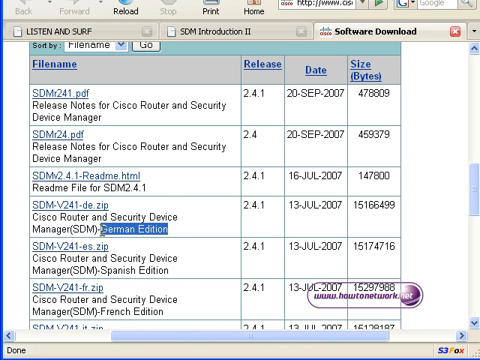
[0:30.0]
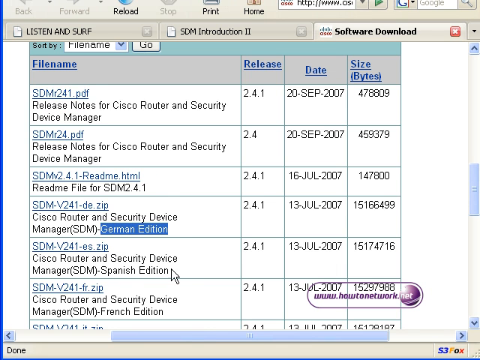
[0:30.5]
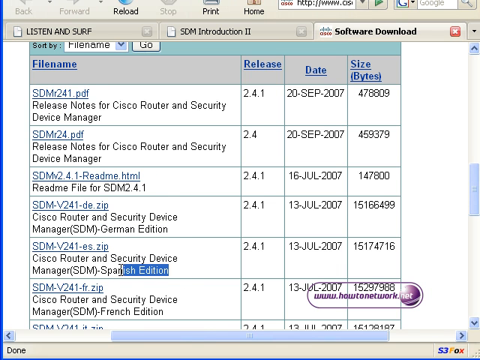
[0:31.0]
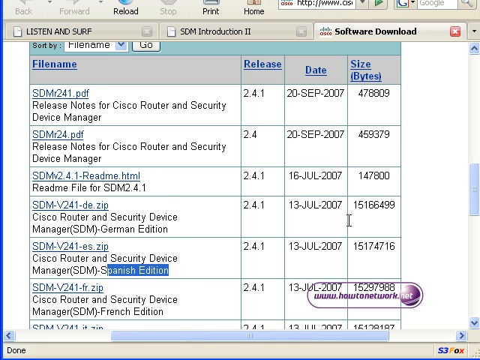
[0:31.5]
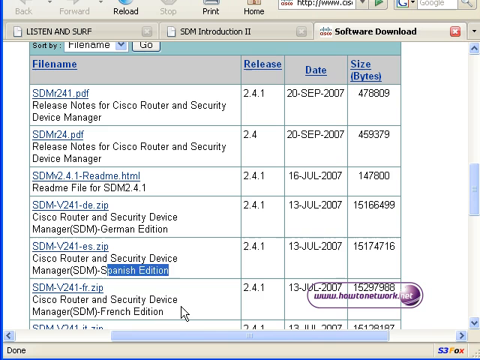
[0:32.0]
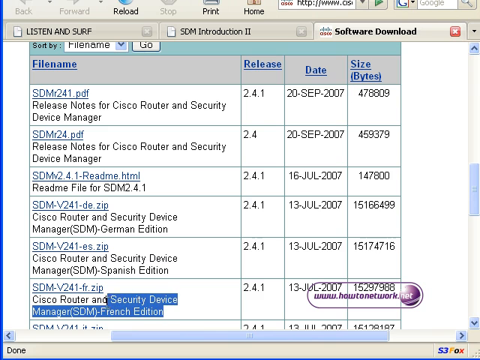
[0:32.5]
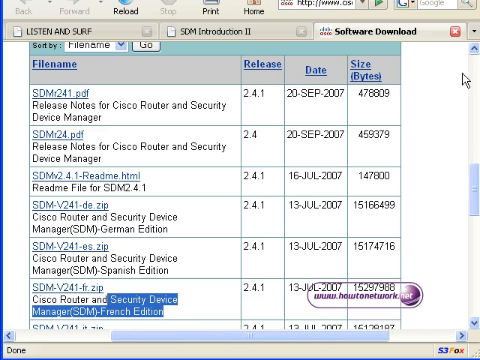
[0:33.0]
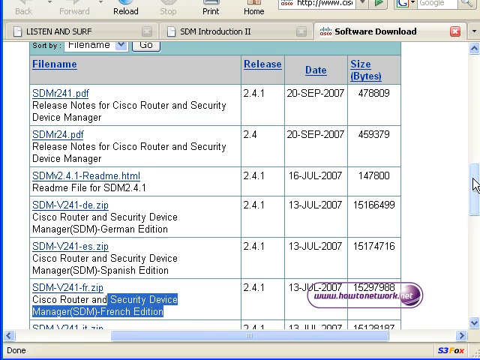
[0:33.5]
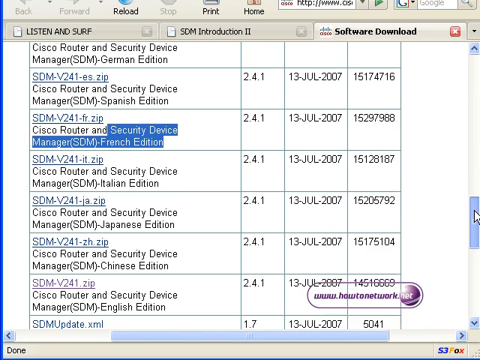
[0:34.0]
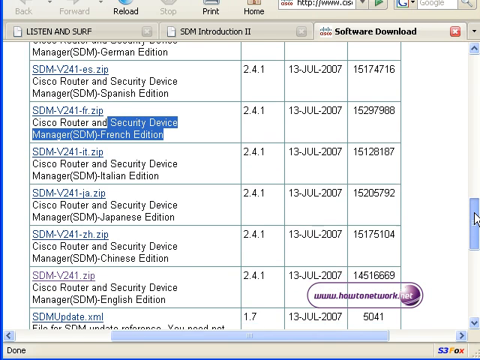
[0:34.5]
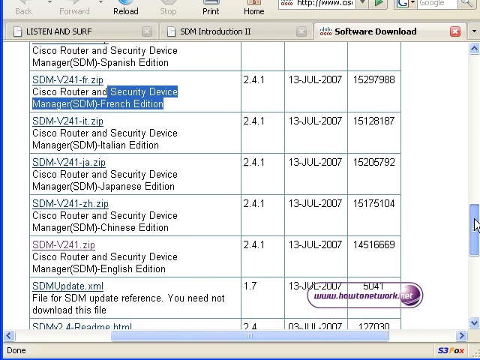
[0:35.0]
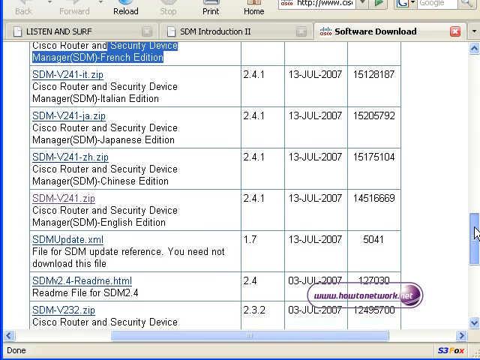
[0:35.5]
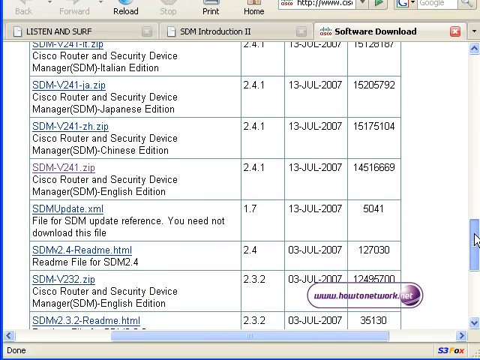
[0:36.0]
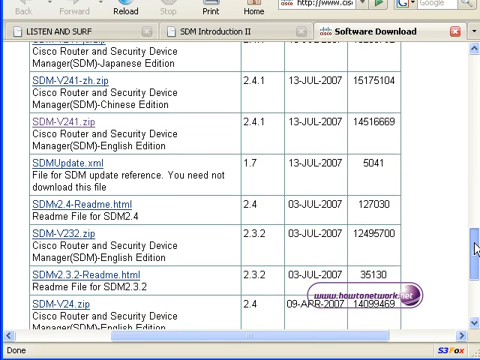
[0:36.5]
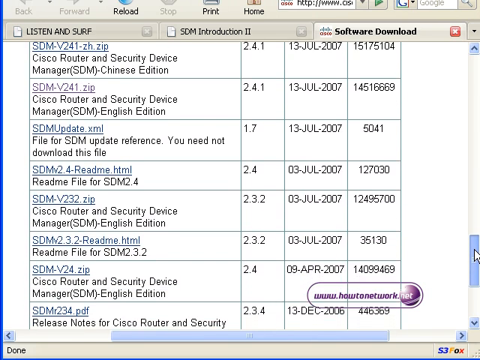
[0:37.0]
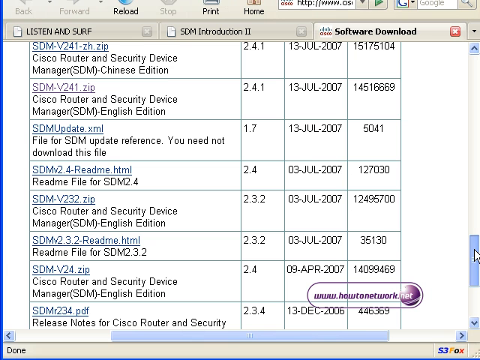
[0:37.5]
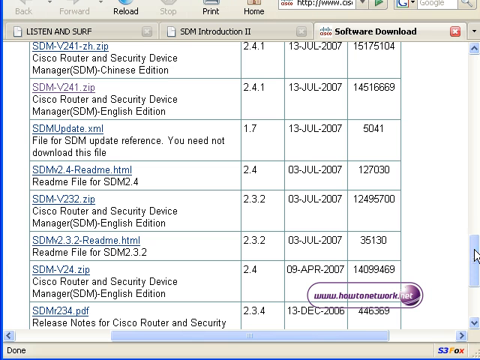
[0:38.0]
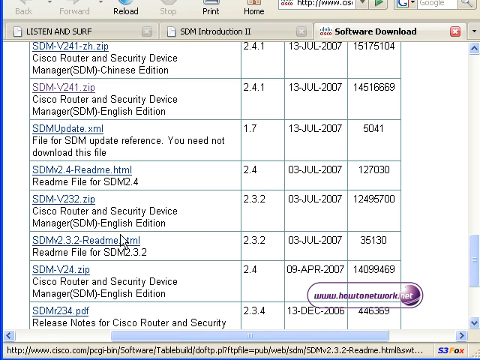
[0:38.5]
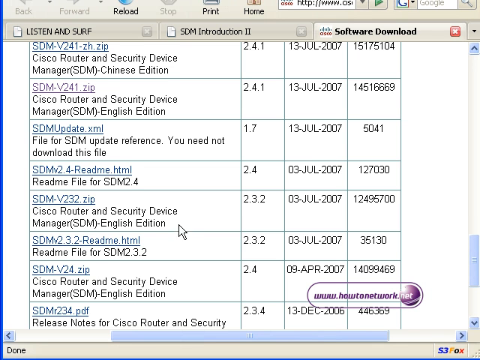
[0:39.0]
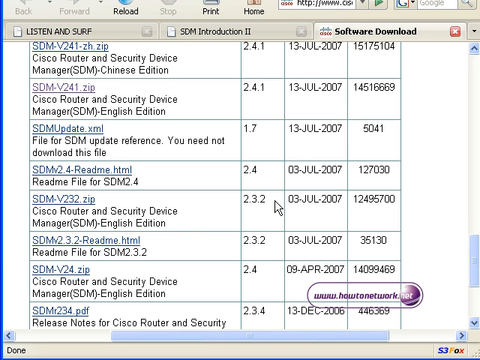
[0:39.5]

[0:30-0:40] The view slowly scrolls down the same chart while a white mouse highlights in blue different words in the file names: first "German Edition", then "Spanish Edition", then "Security Device Manager, SDM, French Edition". The page keeps scrolling down, and then the numbers "2.3.2" are highlighted. The chart also lists the dates of the files, their sizes in bytes, and the model number.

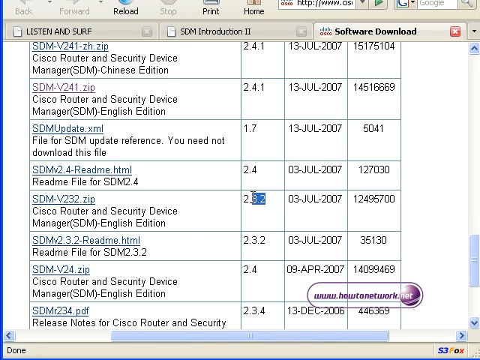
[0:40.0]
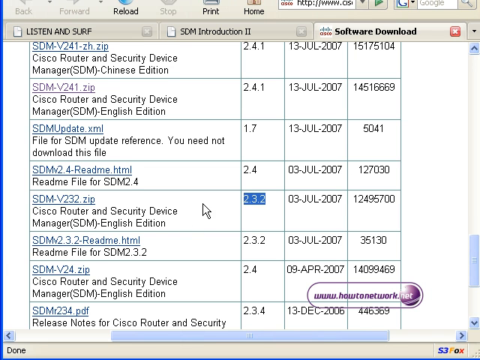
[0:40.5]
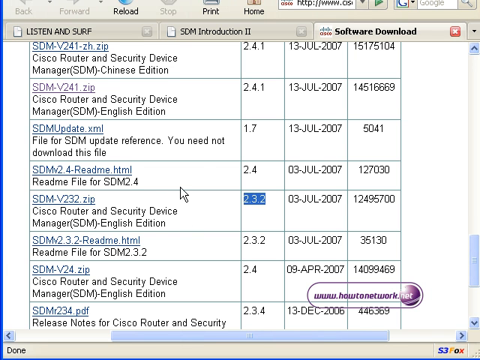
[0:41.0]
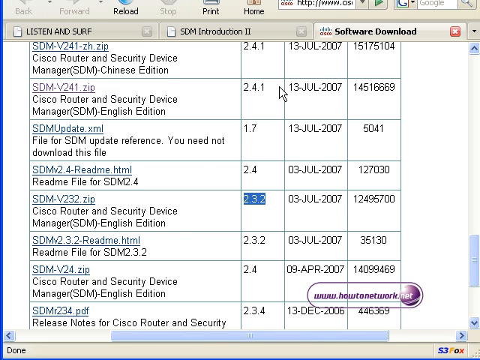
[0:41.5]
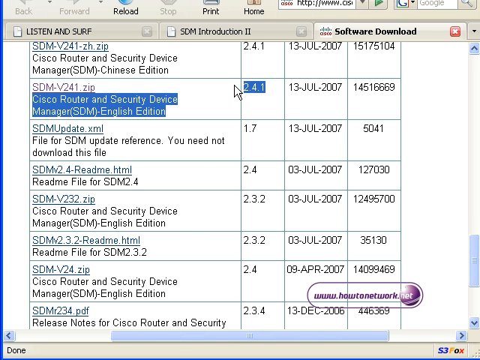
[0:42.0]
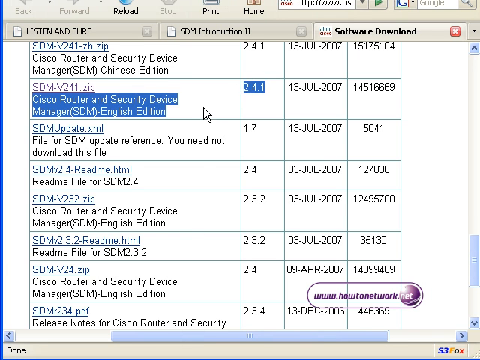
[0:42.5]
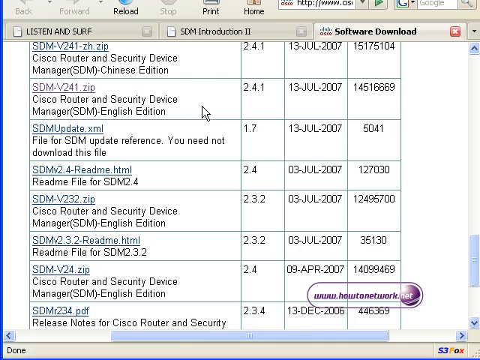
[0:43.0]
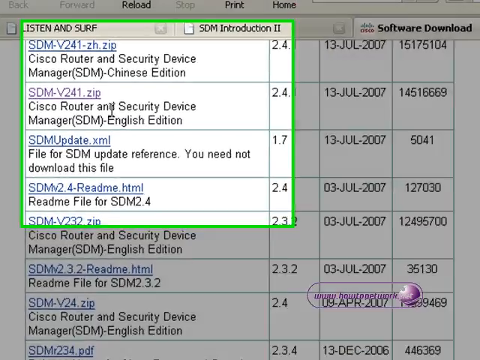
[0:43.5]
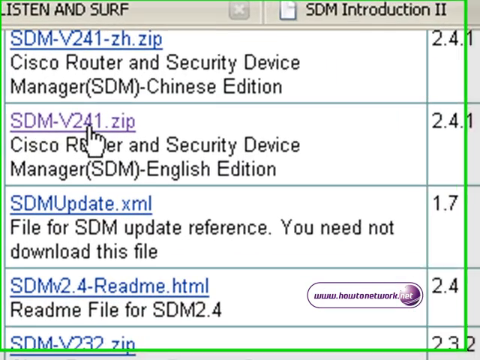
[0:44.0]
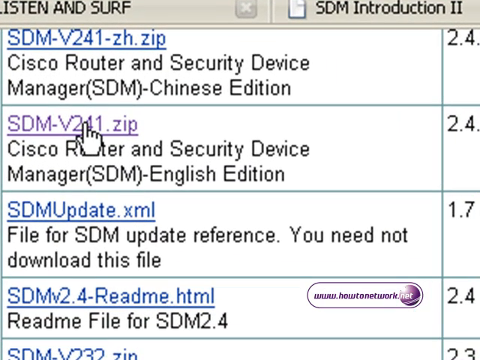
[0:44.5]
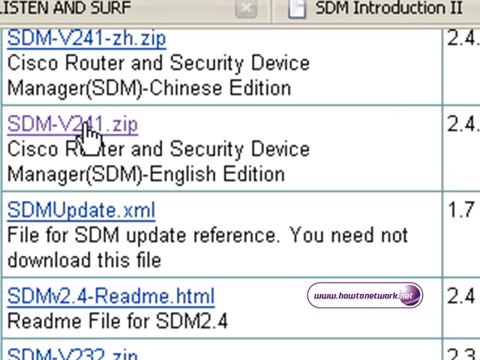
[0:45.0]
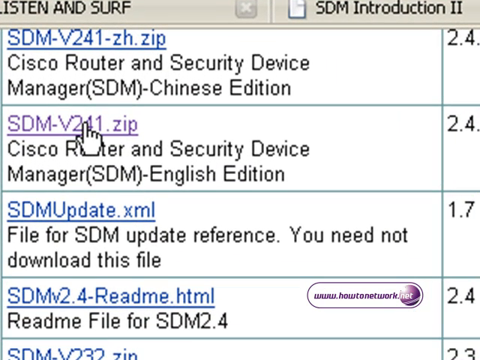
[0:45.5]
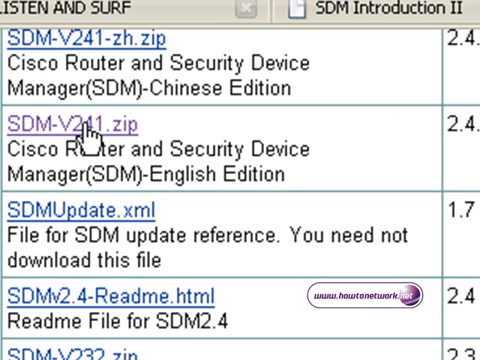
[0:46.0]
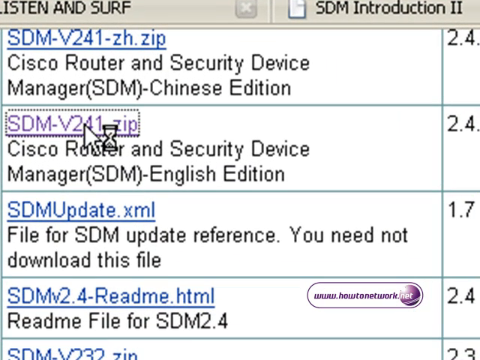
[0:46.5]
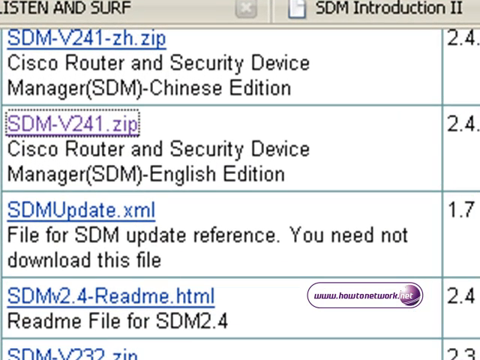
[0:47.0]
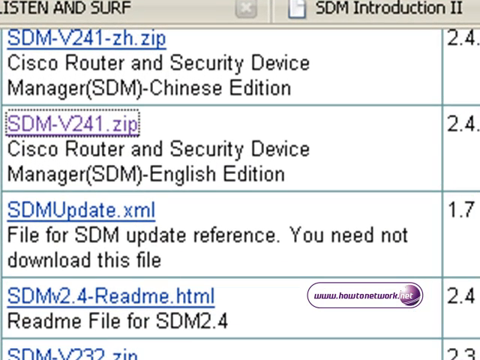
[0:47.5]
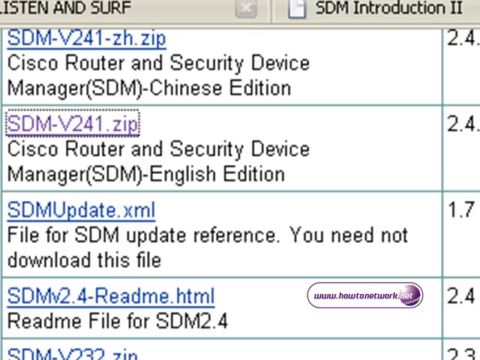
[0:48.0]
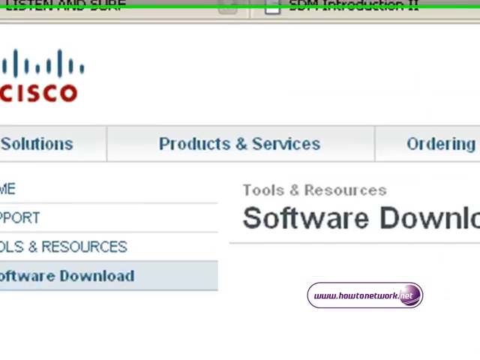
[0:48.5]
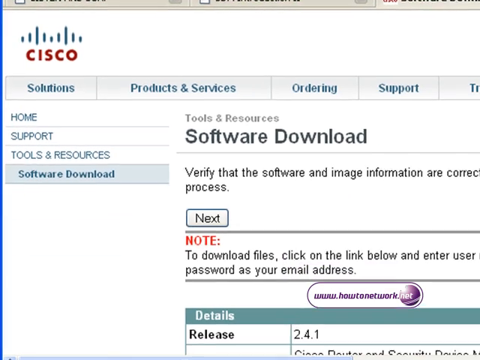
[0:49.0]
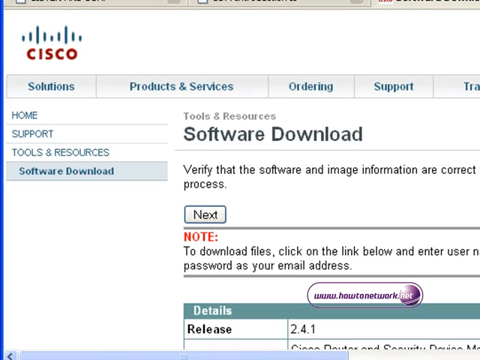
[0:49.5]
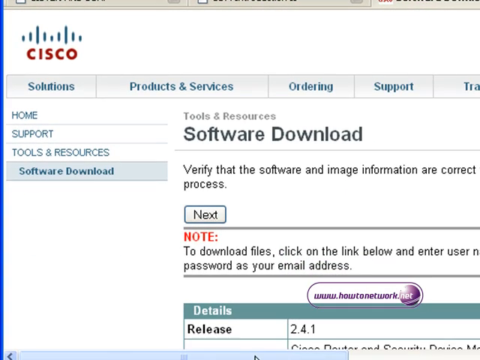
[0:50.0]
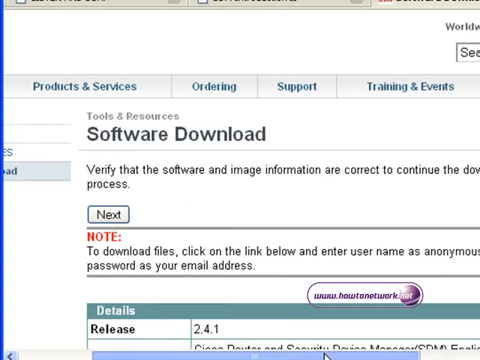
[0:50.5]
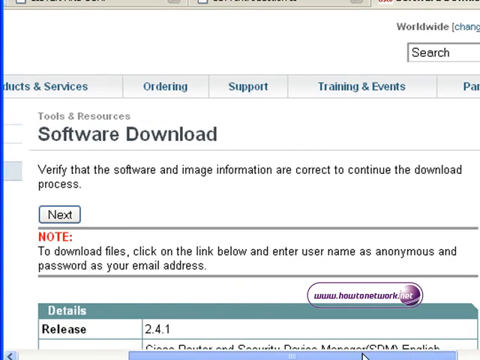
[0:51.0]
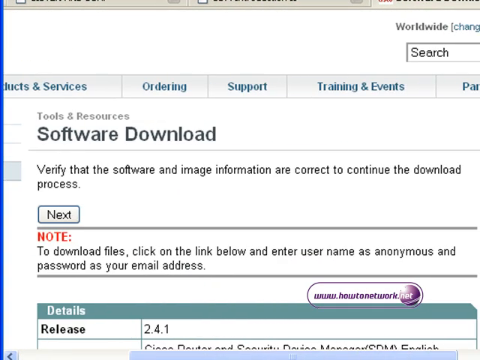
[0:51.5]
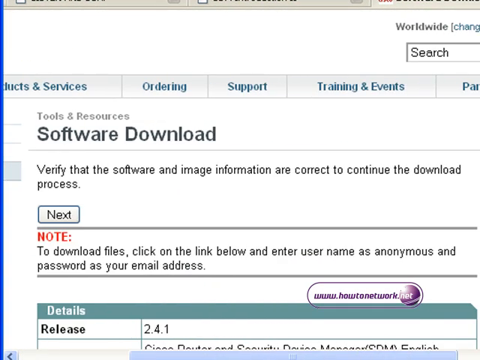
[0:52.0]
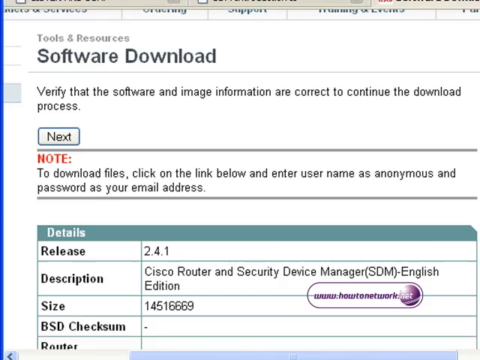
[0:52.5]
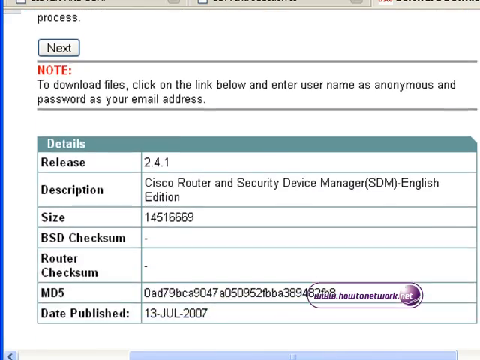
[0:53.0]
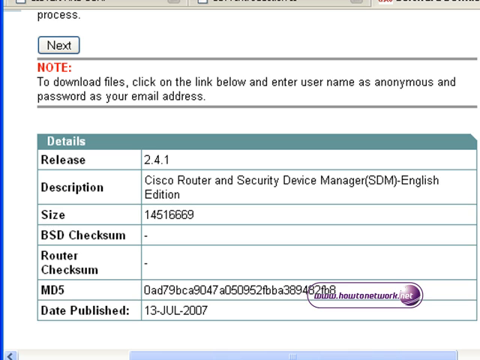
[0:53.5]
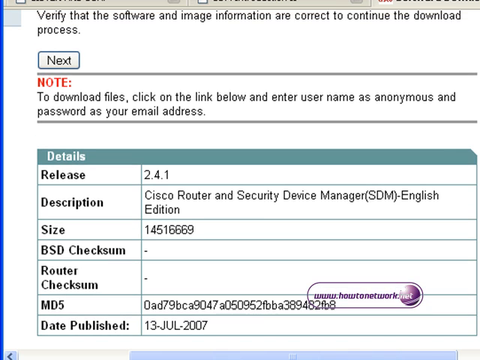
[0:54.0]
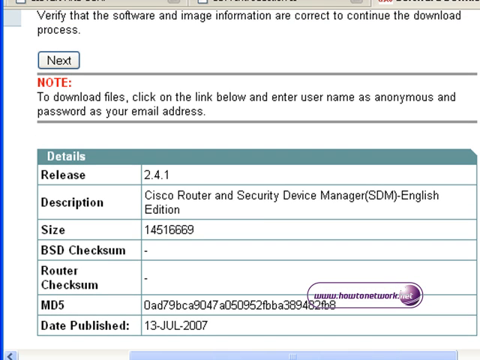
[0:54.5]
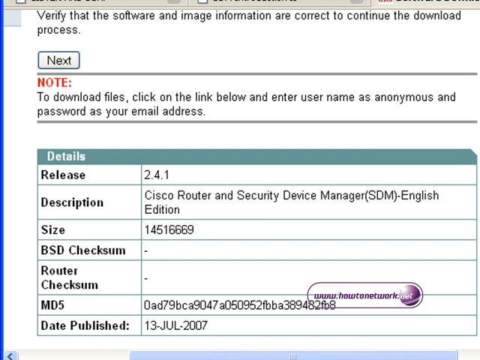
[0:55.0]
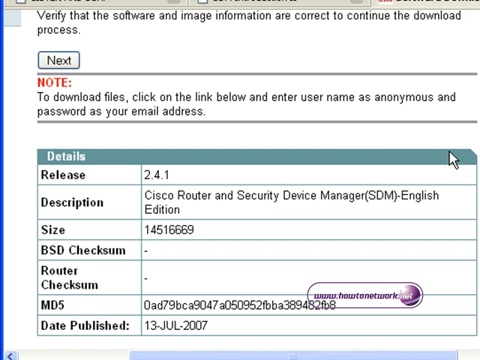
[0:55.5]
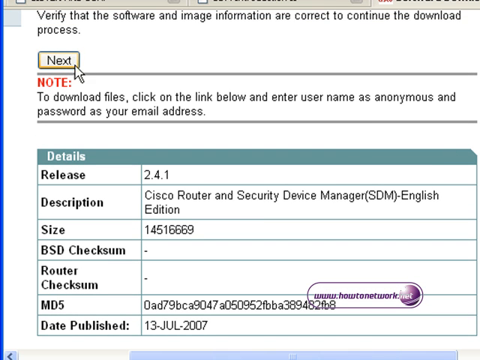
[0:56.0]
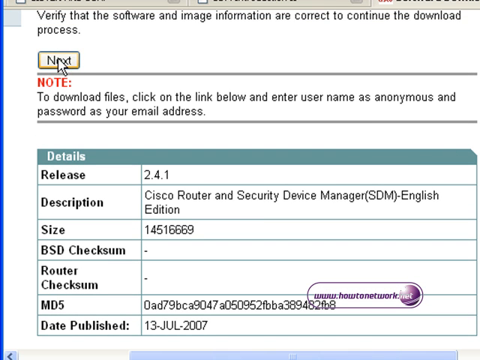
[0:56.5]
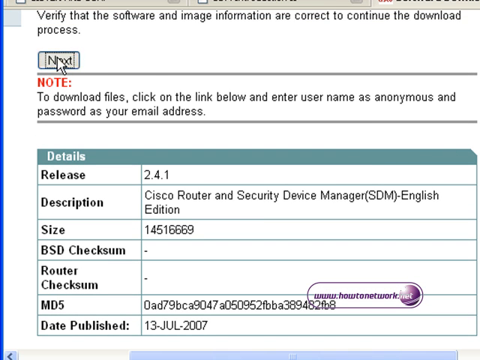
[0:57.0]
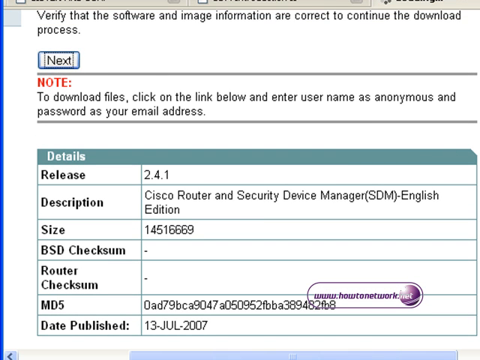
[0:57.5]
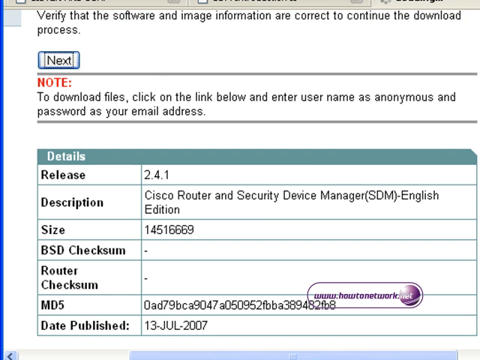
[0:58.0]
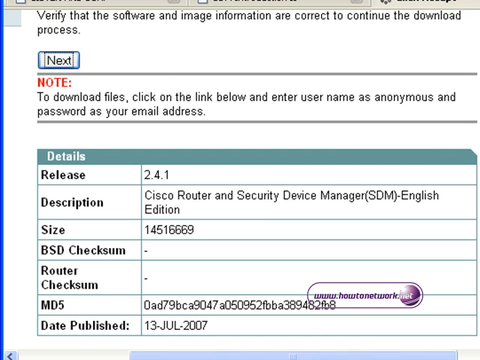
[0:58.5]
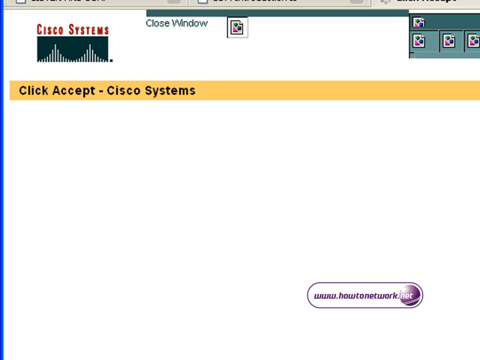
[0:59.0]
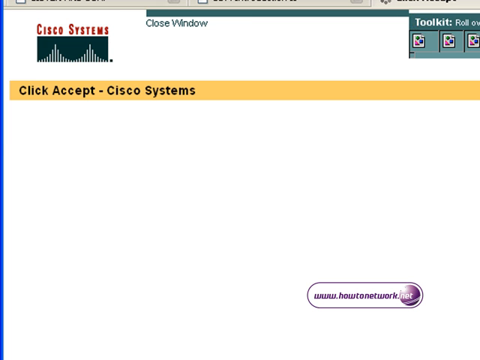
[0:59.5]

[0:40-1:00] "2.4.1" and "Cisco Router and Security Device Manager SDM-English Edition" are highlighted. A small screen capture appears in a box with a green border, the screen zooms in on it, and the mouse clicks "SDM-V241.zip". A small hourglass appears as the website is probably loading the file. When the file is selected, its letters change from dark blue to dark purple. A different page opens with the software download instructions for the English Edition and a new chart. The arrow clicks a next button, another hourglass appears, and the next page asks the user to click accept.